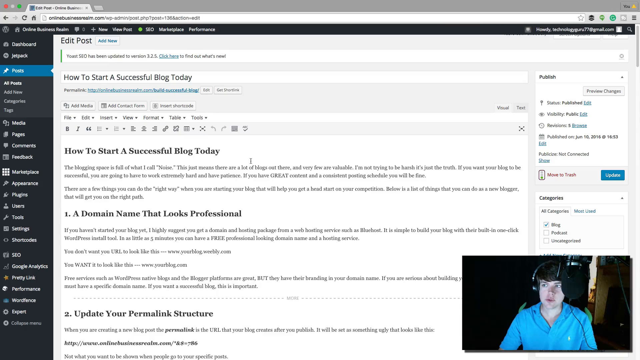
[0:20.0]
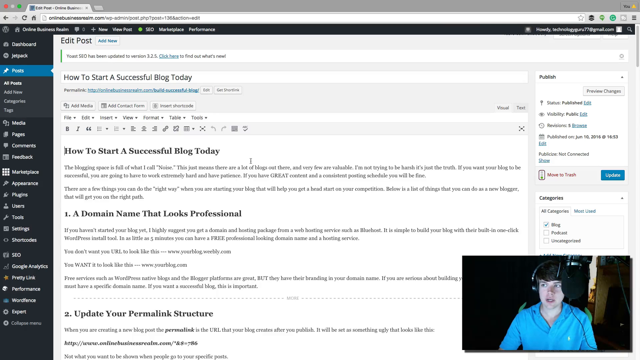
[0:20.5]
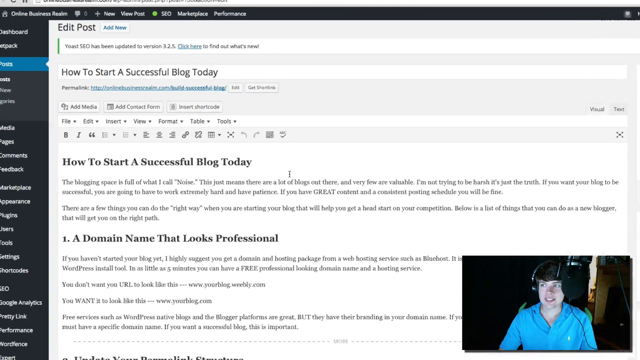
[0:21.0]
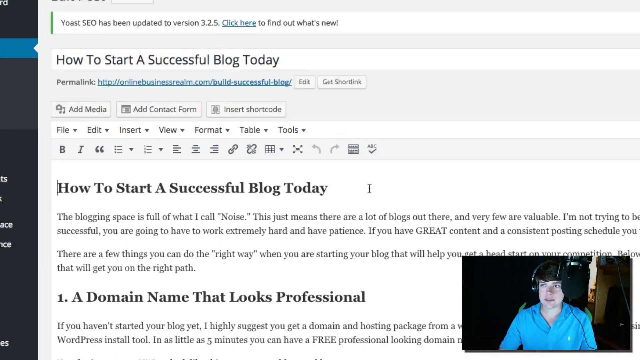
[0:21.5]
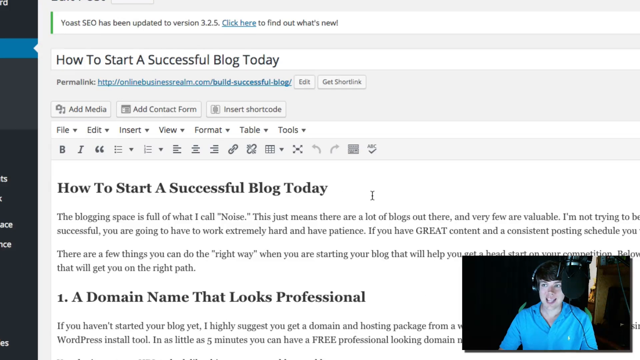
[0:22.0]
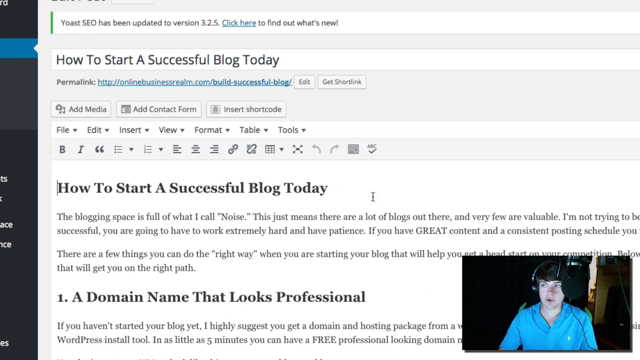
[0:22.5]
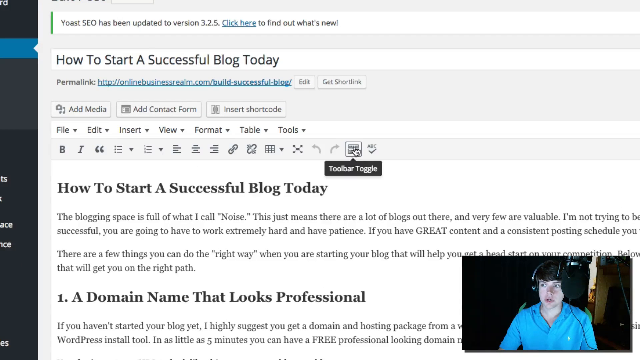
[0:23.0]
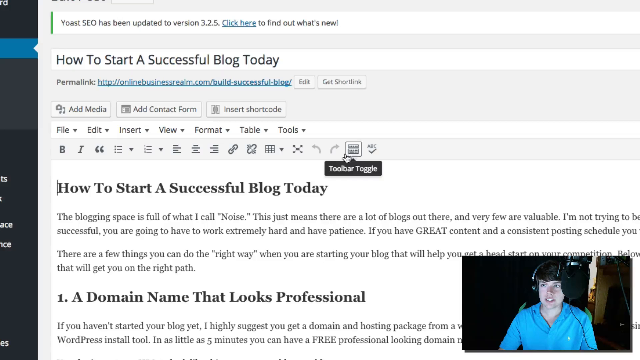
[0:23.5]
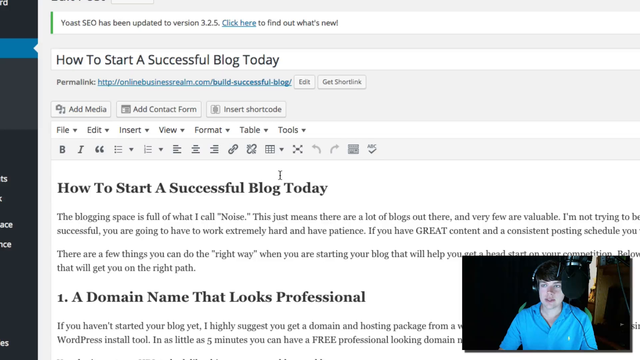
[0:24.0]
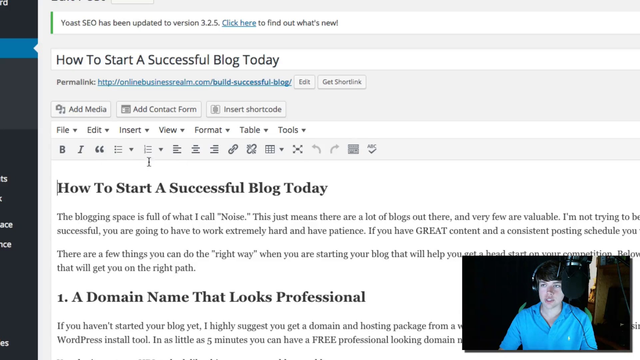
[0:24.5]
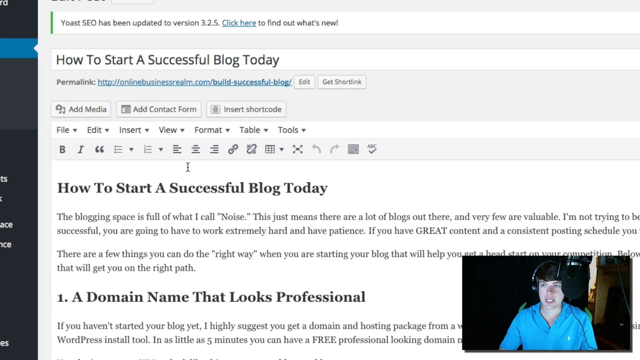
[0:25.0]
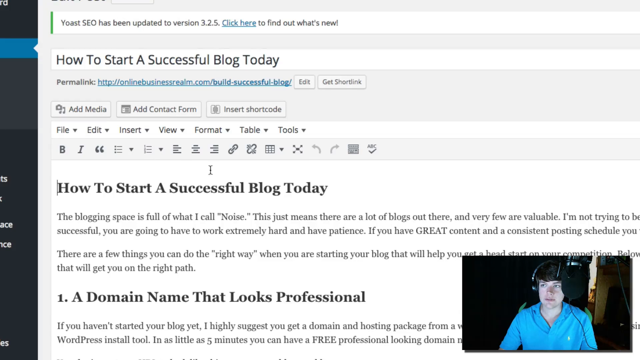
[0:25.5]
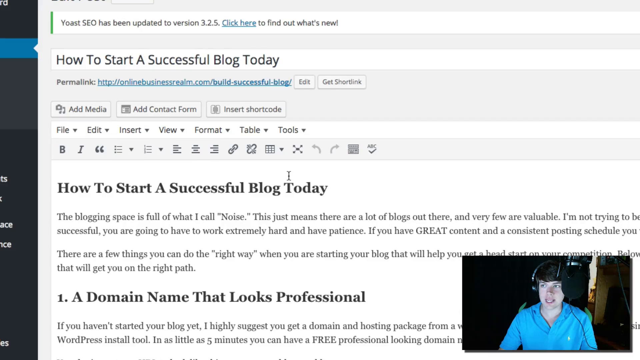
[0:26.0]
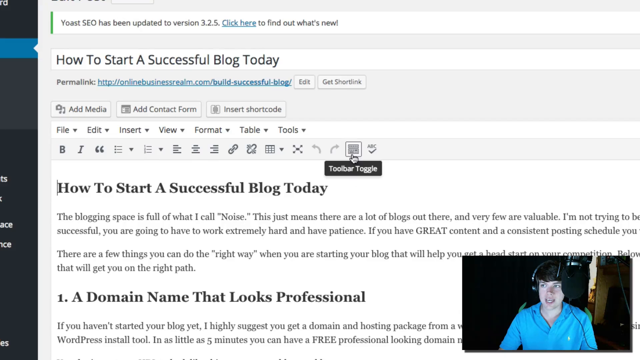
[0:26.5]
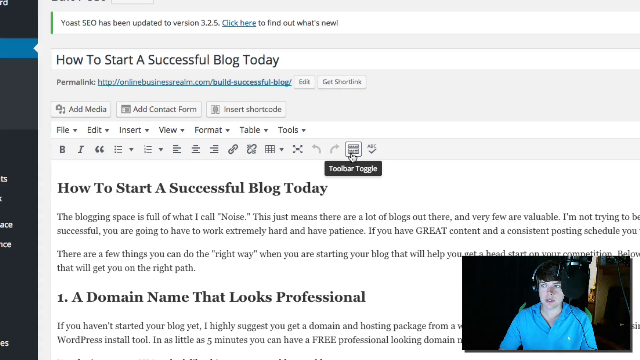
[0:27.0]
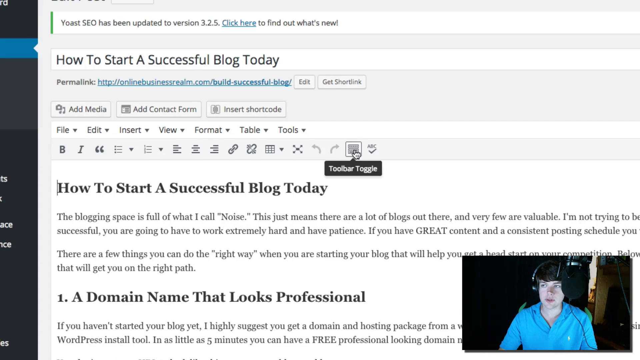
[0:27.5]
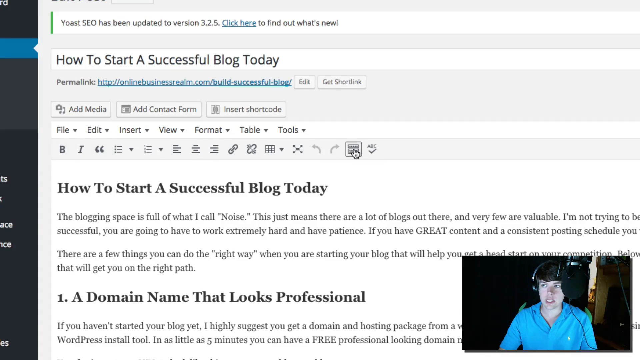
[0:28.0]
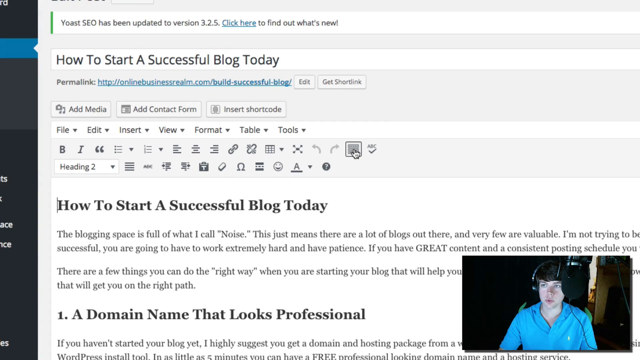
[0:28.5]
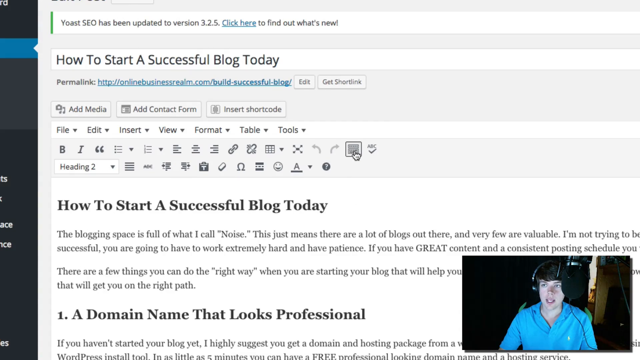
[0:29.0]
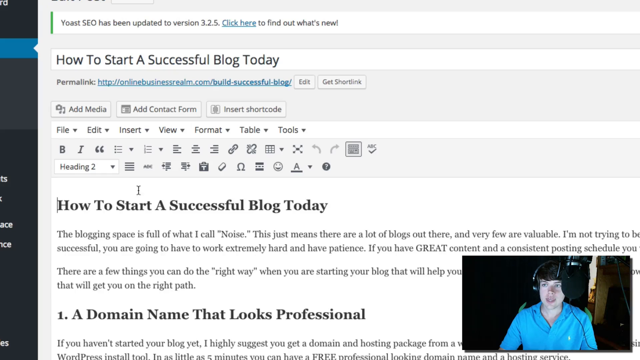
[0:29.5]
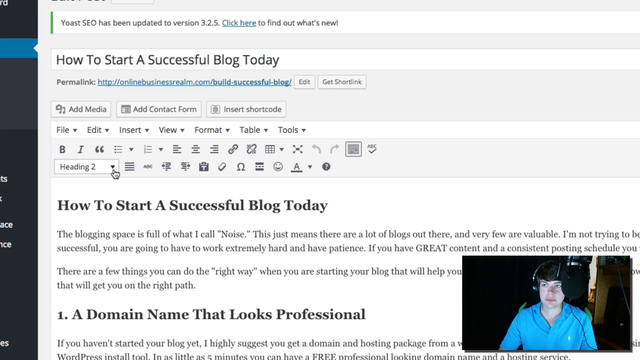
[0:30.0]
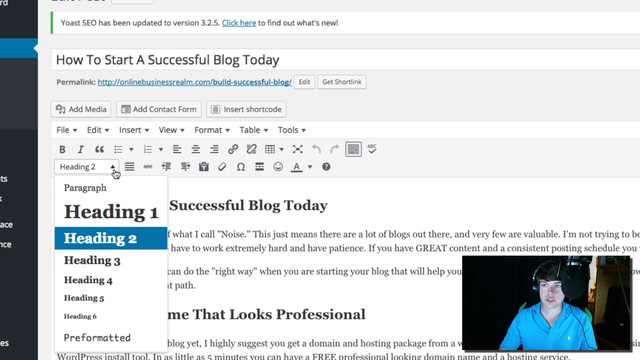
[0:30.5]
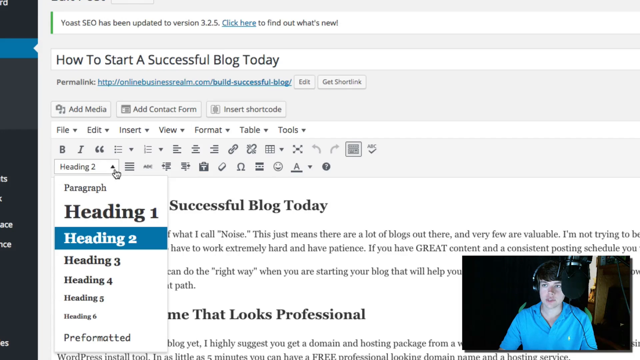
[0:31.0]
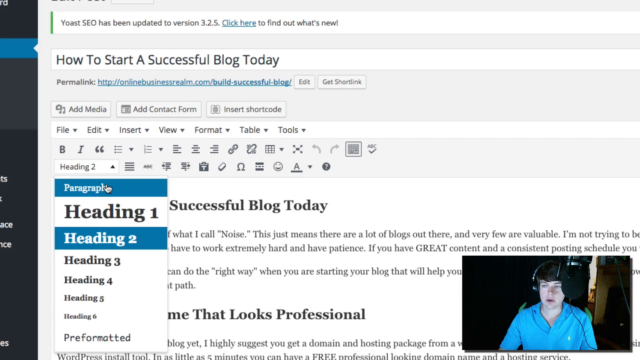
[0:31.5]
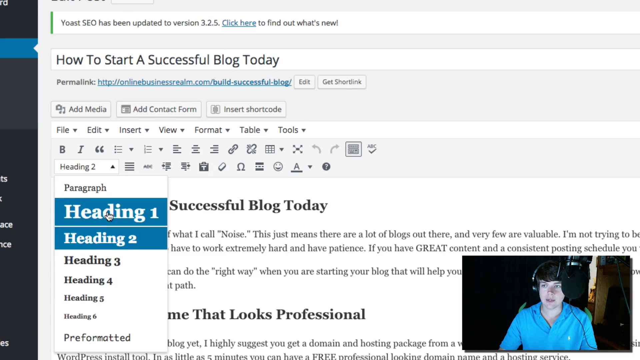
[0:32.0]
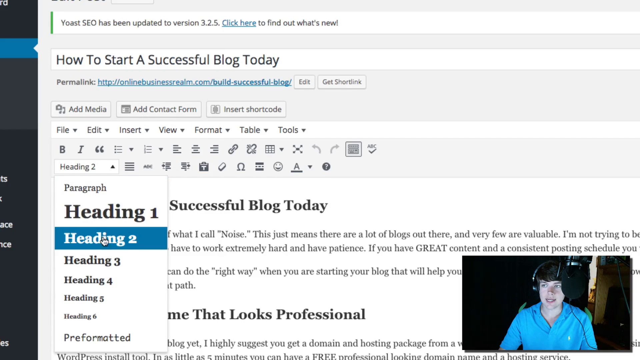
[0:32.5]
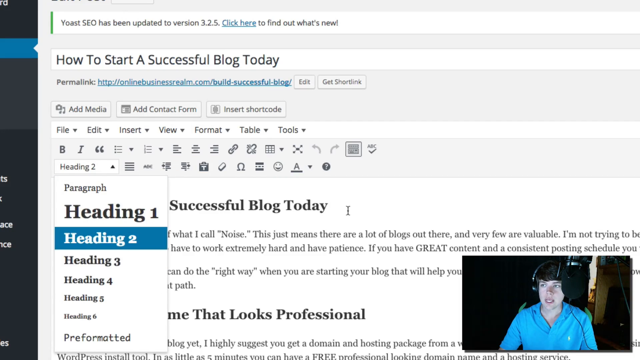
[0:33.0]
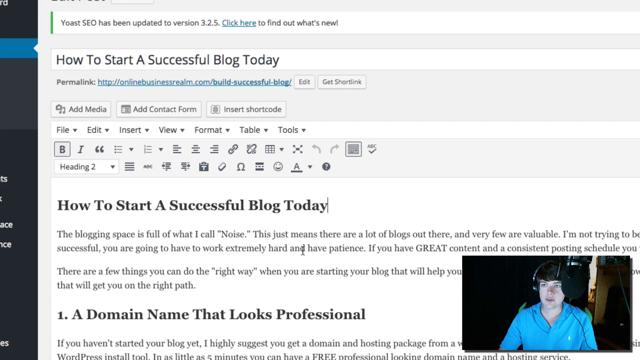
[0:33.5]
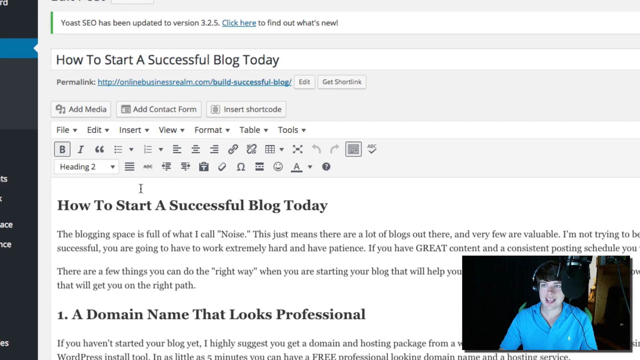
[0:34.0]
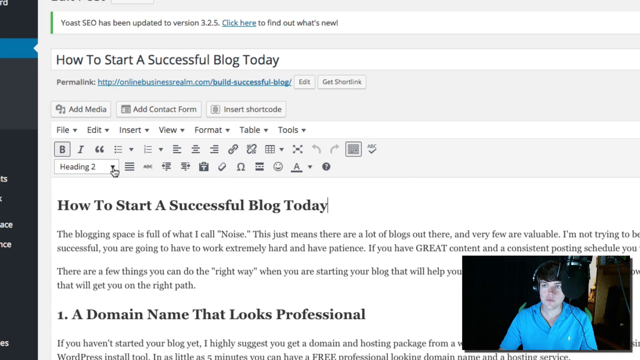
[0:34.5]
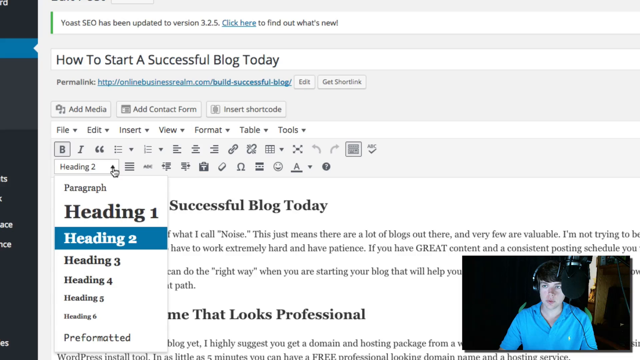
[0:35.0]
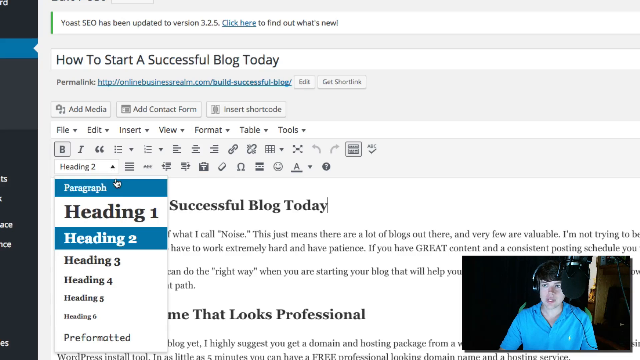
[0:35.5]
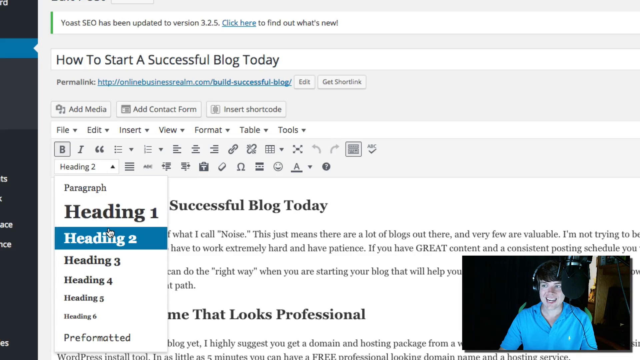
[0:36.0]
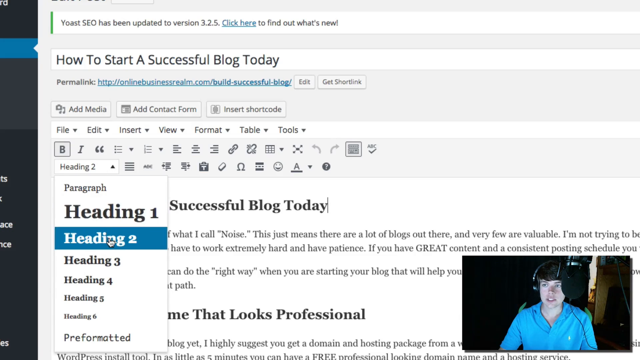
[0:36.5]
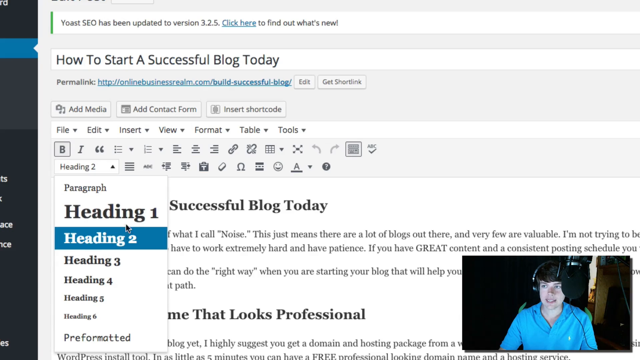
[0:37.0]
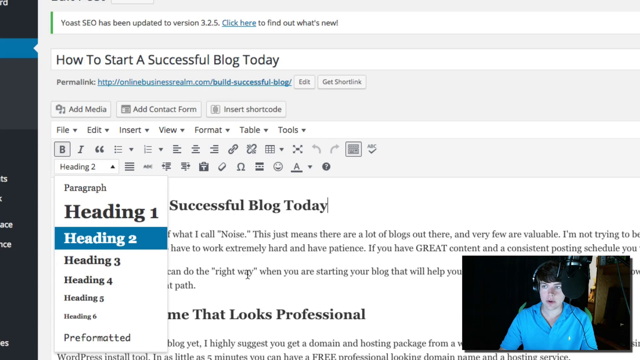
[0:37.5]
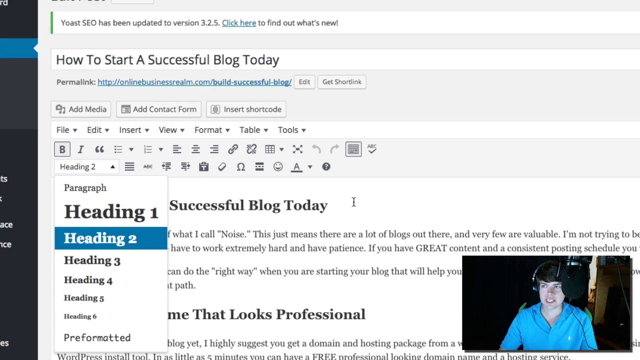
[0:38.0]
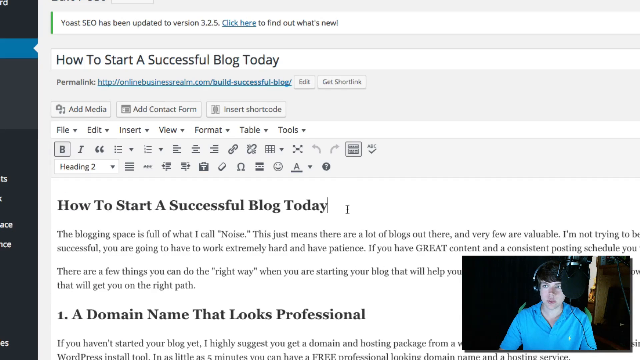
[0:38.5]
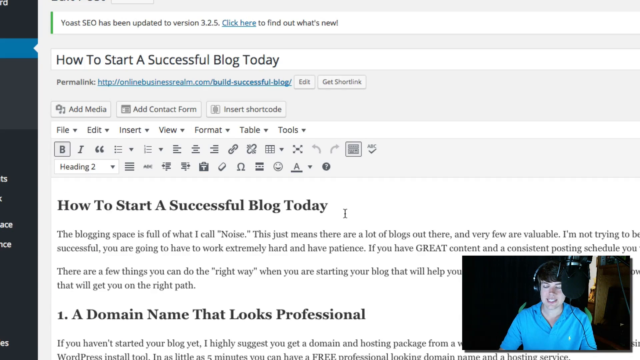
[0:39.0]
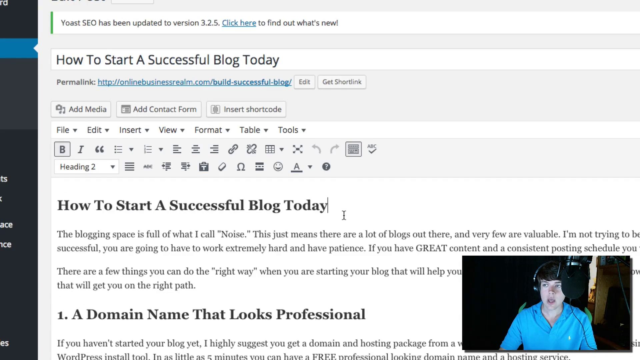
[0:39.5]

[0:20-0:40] An edit page shows the main title "how to start a successful blog today". The first item listed is "a domain name that looks professional", and the second is "update your permanent link structure". In the lower right-hand corner is a live podcast feed of a young man in a blue shirt and over-the-ear headphones speaking into a boom mic. The screen zooms in, and the young man seems to be talking about what he is controlling. He highlights the toolbar toggle underneath the file settings and how to adjust header size for the font and layout of the page, showing how to adjust header size and font size in the page layout.